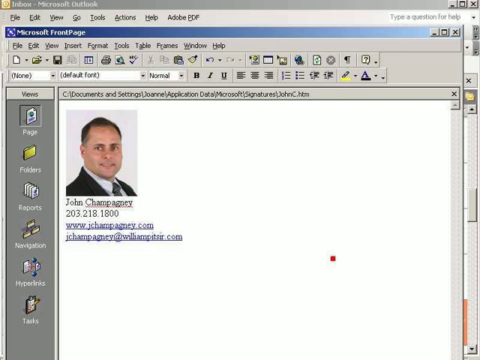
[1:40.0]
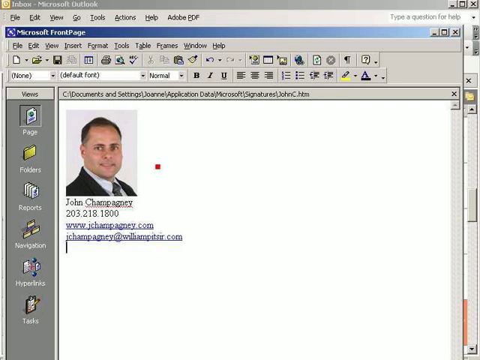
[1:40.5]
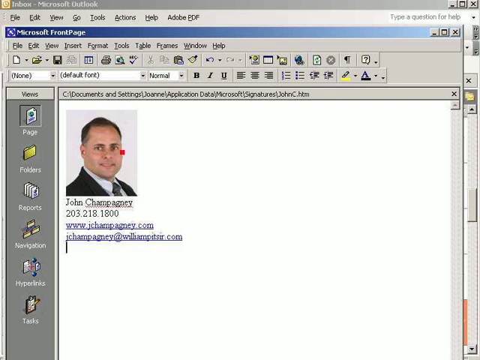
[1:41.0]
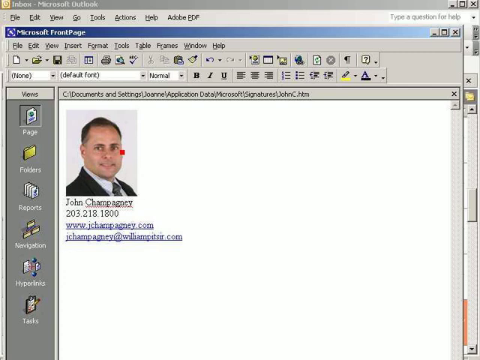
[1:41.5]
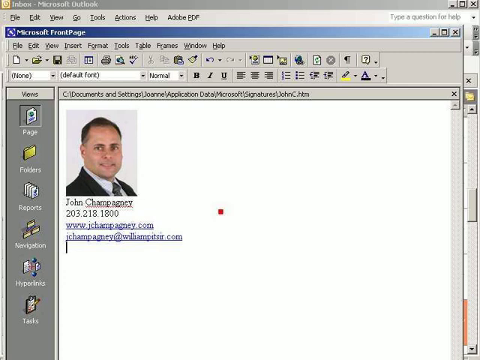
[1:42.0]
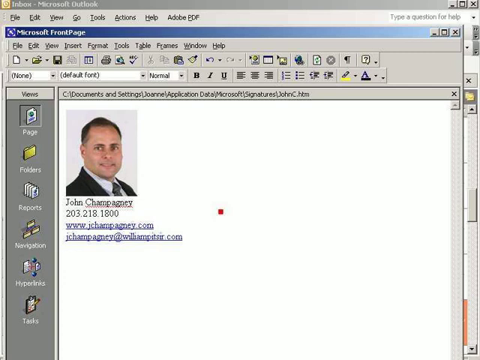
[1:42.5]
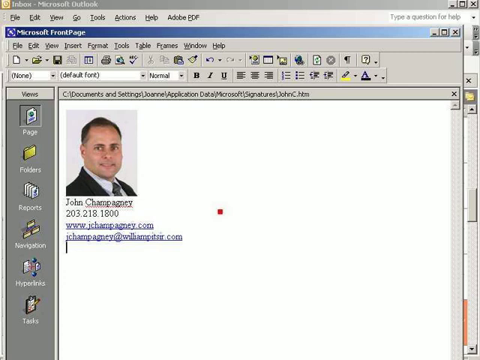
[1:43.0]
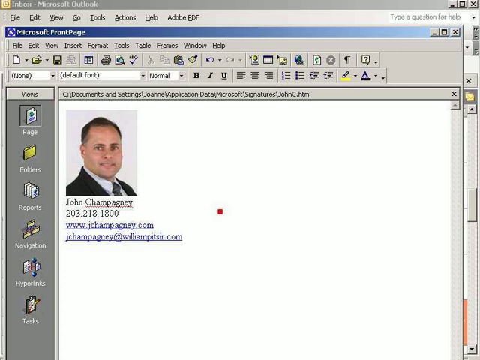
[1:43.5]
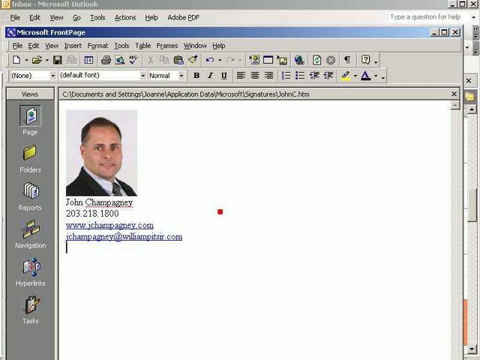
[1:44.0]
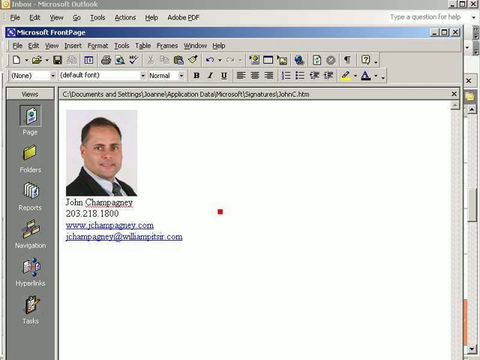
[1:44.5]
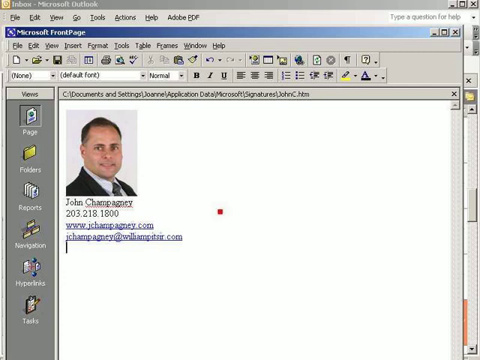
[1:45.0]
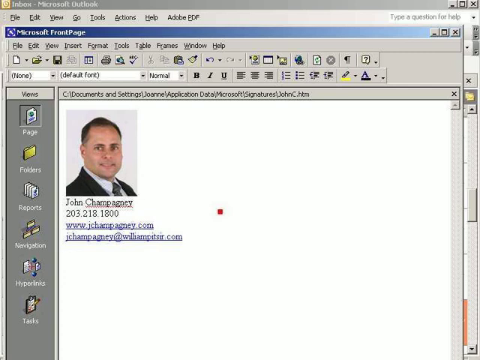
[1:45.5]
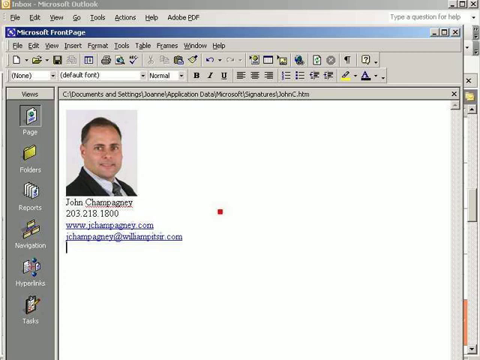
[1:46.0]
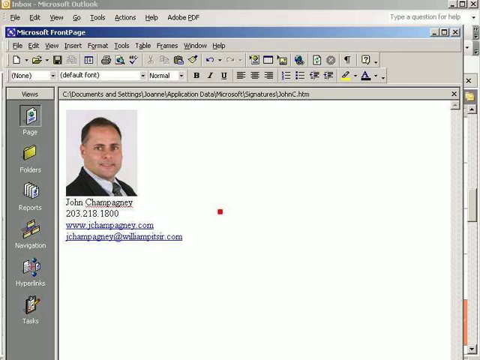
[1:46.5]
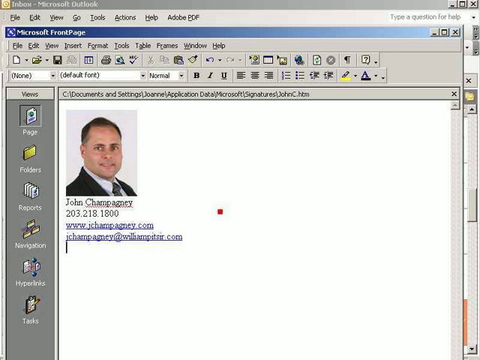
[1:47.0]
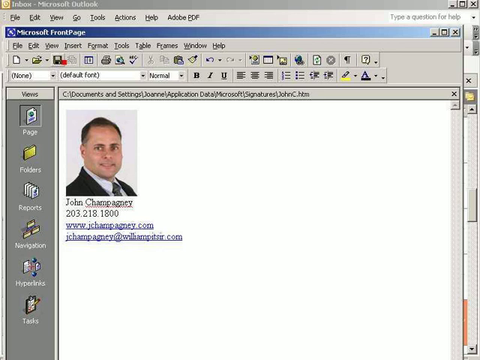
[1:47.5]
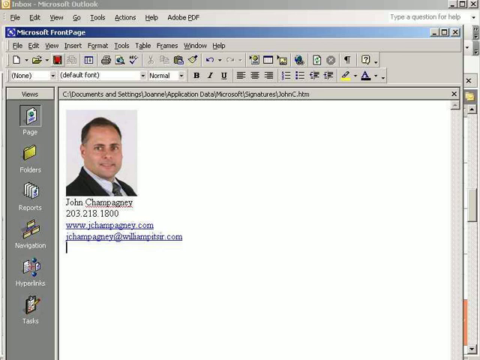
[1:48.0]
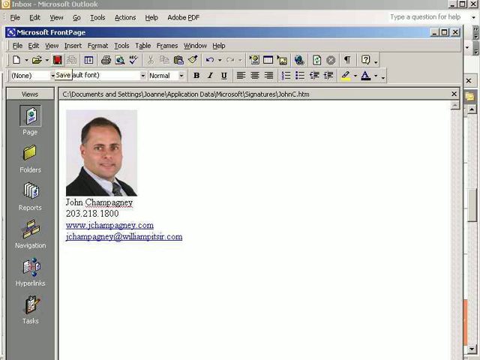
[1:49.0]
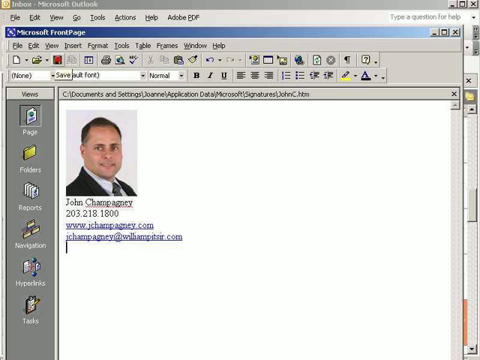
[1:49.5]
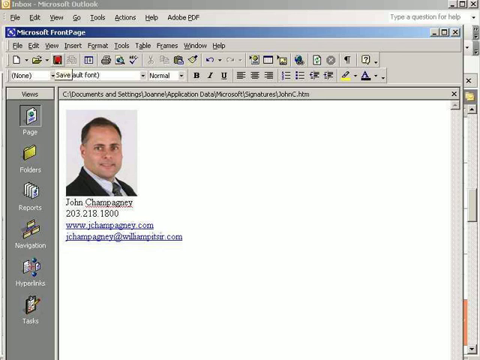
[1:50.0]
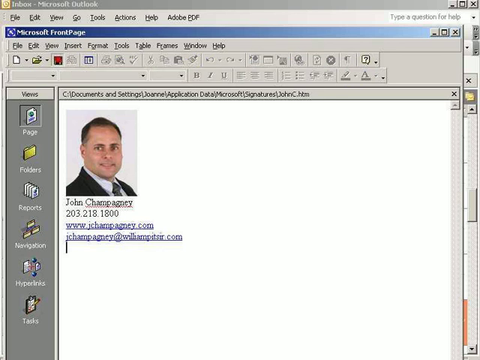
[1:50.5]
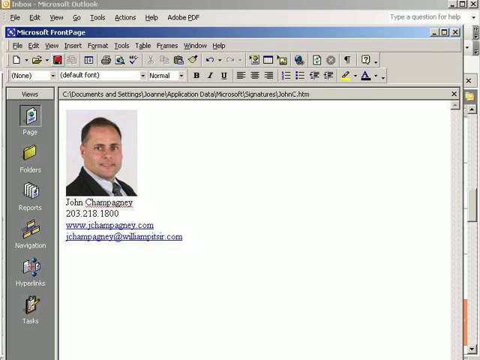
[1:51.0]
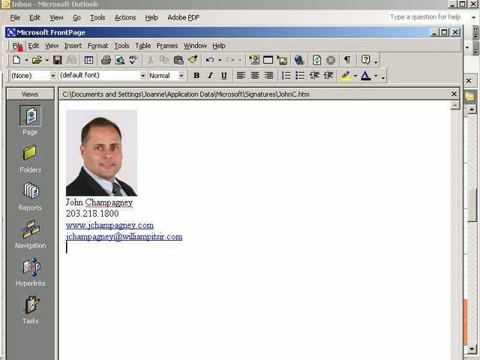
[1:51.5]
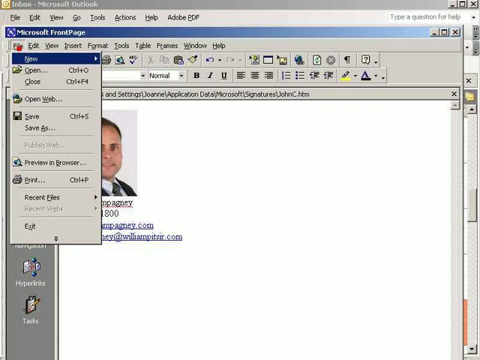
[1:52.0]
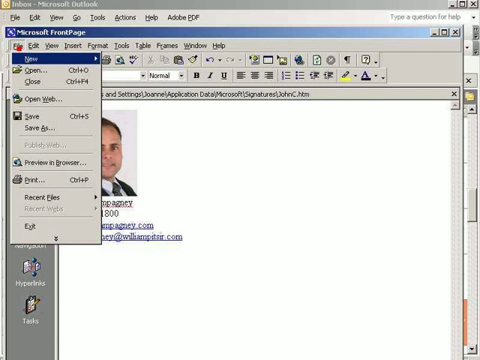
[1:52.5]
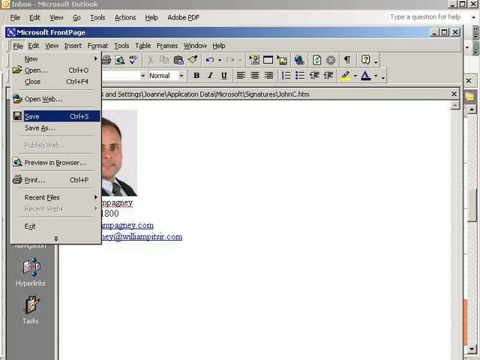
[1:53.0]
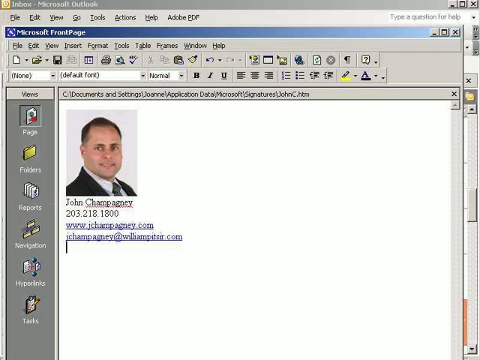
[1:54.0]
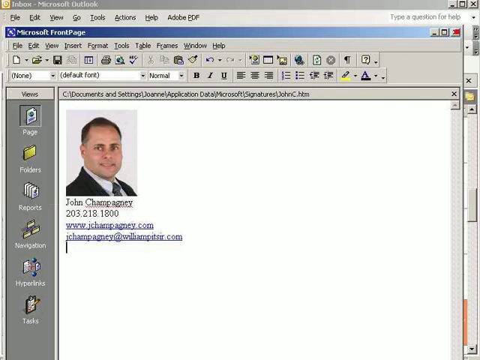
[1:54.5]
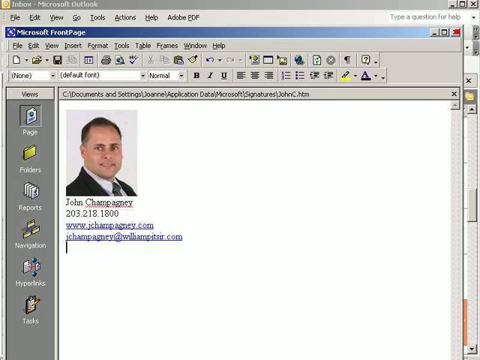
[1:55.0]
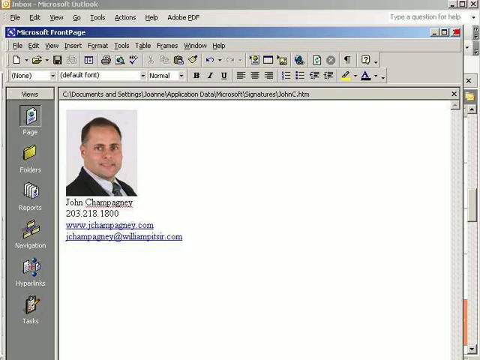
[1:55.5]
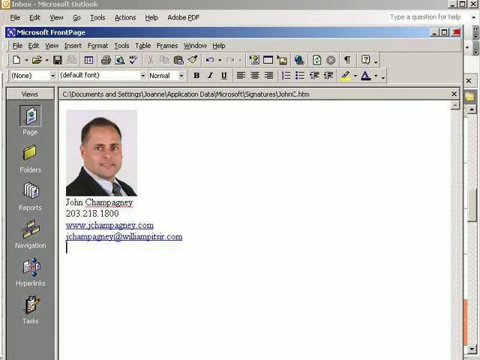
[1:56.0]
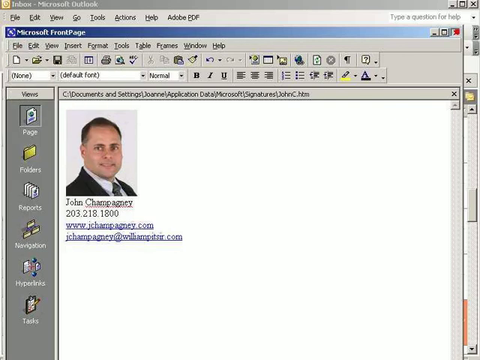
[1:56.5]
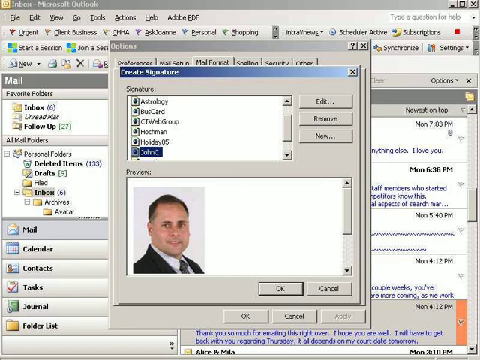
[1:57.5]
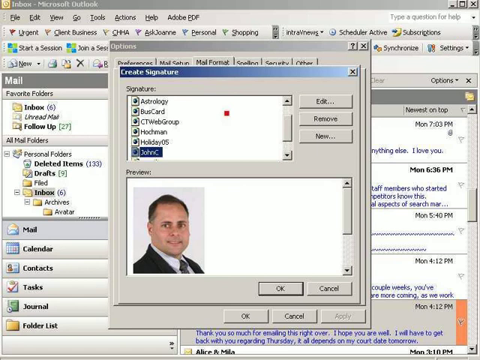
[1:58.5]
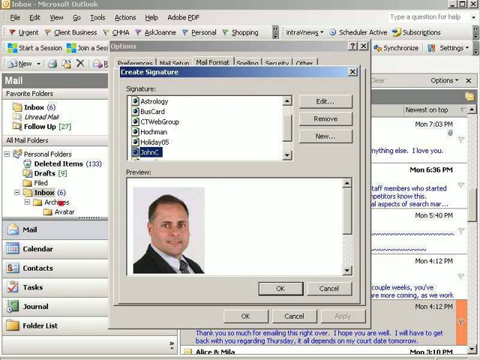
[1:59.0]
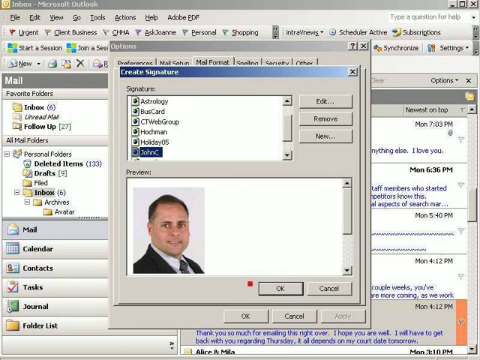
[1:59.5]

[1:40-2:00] The screen barely changes, showing the same signature page with the headshot photo, name, phone number, website and email address listed. The user seems to go back and accept the signature creation. The mouse moves to the save option and then to File, then closes out of that and goes back to the create signature tab, where the new signature shows.